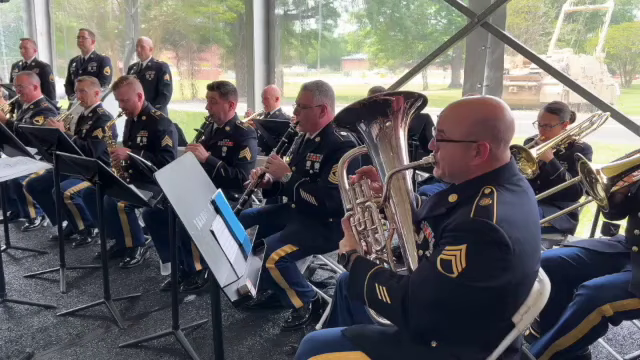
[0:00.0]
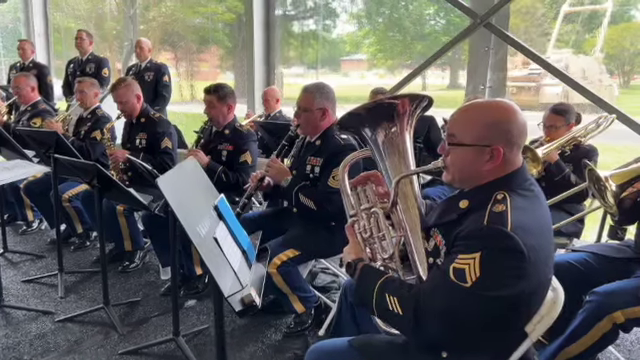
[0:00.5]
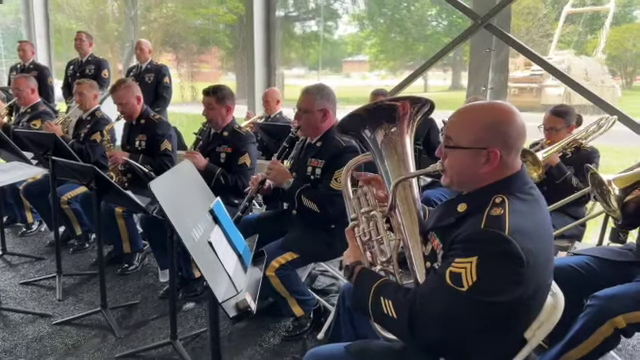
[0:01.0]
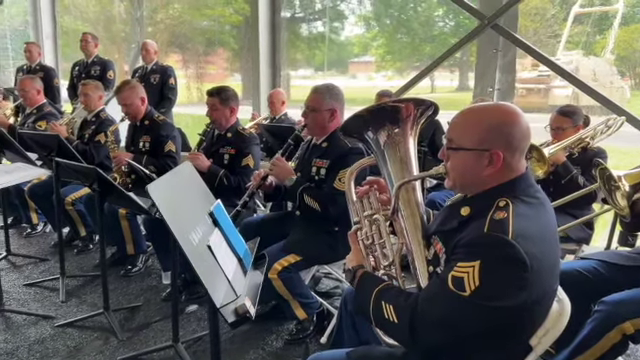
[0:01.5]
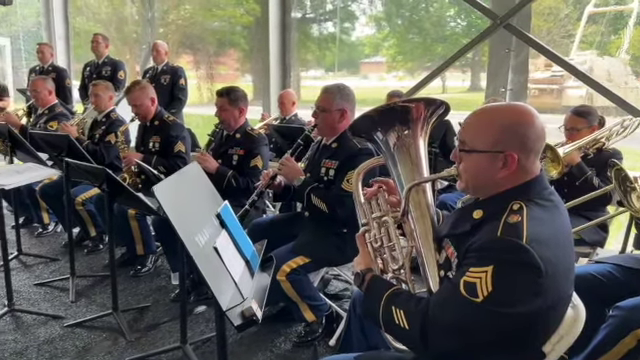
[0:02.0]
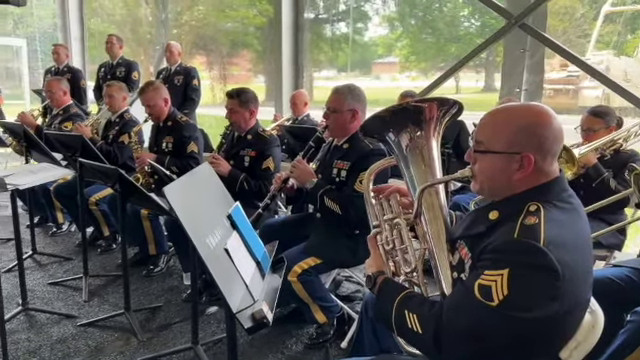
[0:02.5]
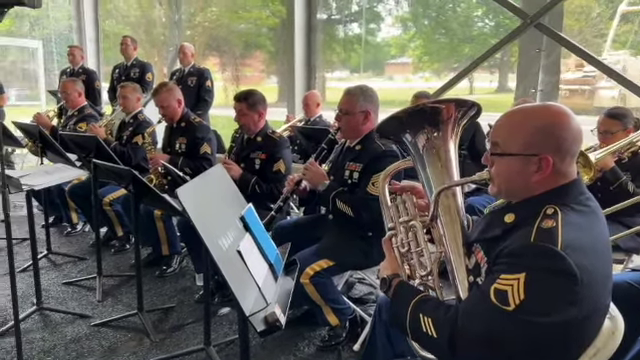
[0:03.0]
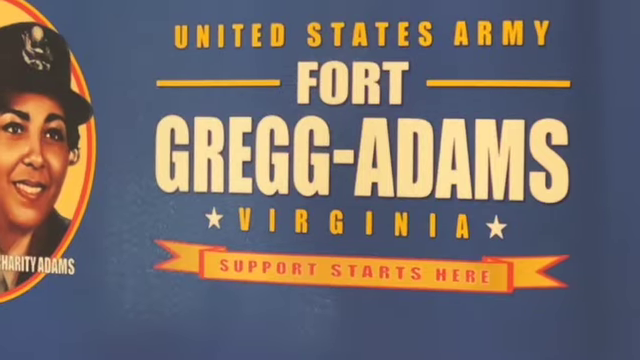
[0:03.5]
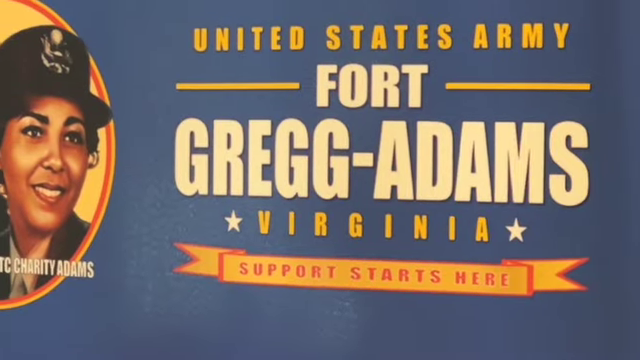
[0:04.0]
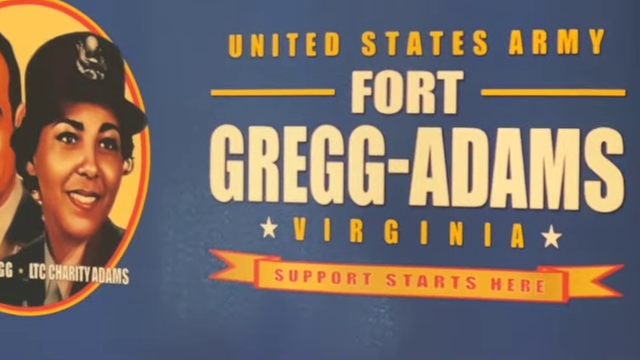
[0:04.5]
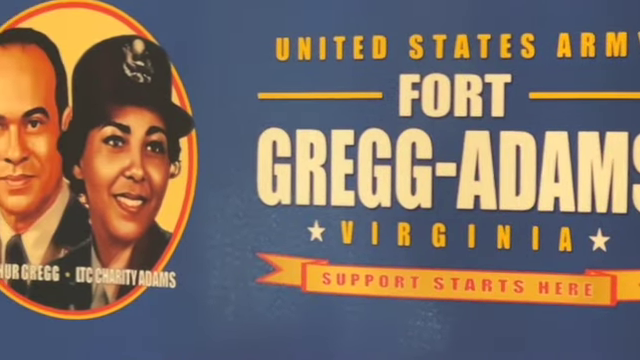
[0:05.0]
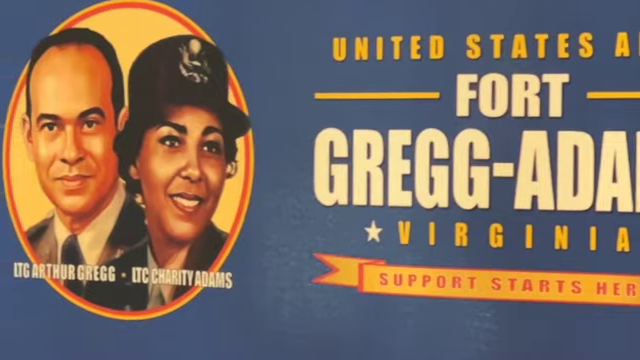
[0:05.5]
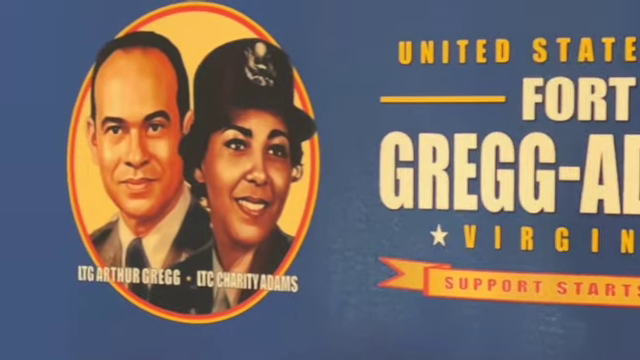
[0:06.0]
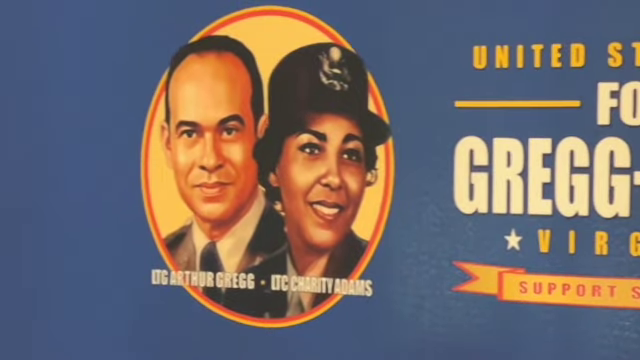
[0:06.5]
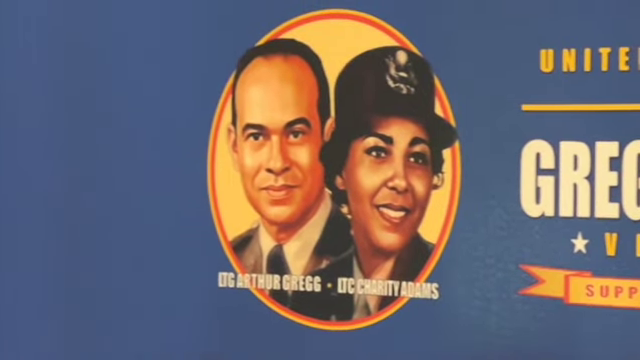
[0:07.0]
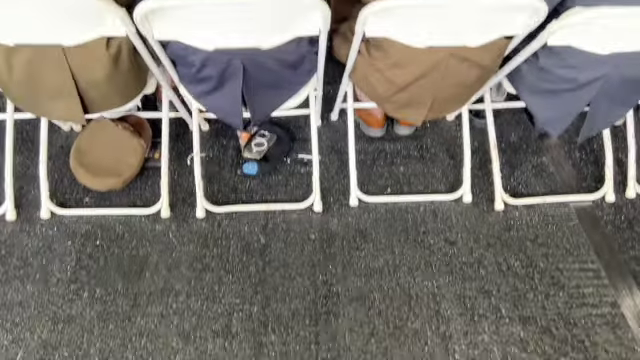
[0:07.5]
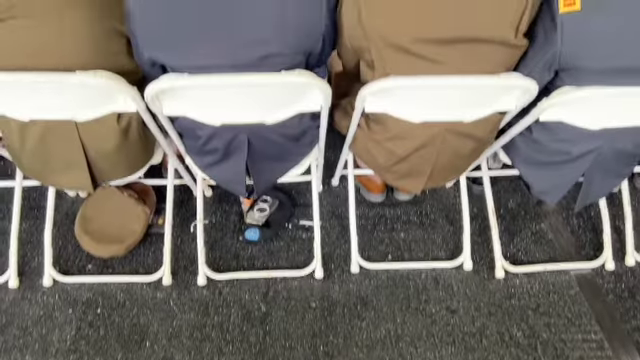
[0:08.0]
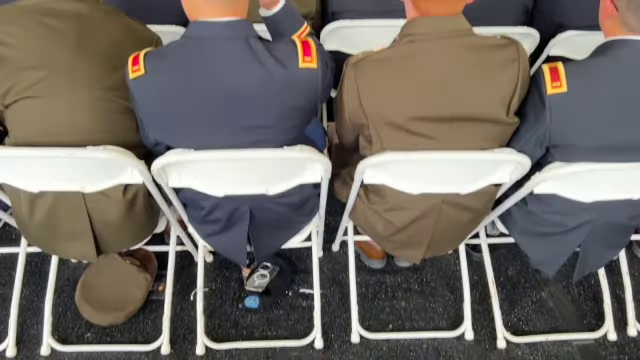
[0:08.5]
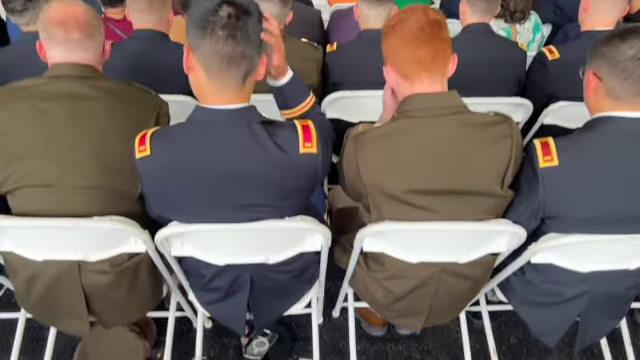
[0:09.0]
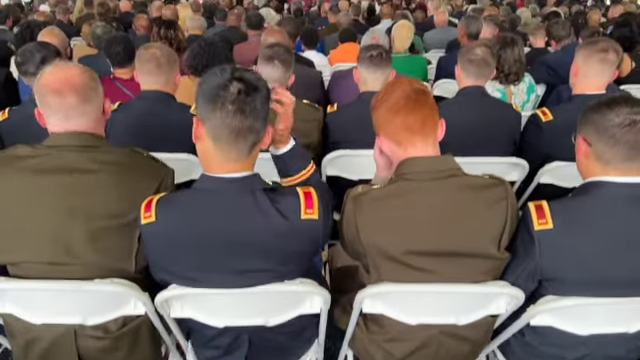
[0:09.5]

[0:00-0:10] A military band performs in what appears to be a celebration; a sign identifies it as the United States Army at Fort Greg Adams in Virginia. Military personnel in the audience all seem to be wearing dress blues. The band seems to be a horn section, with various kinds of horns, including what appears to be a French horn, tubas, clarinets, oboes and saxophones. Three men standing towards the back may have some sort of percussion instruments, though it is hard to tell from this angle. The musicians have music stands in front of them holding their music.